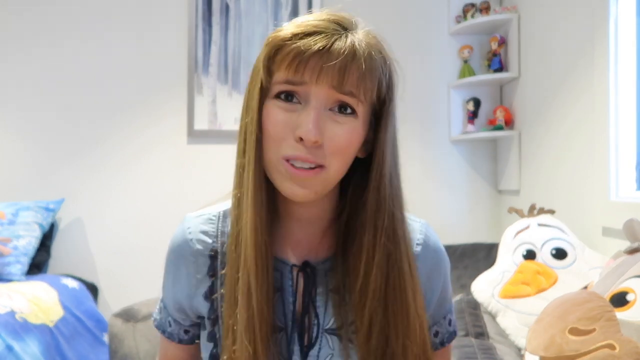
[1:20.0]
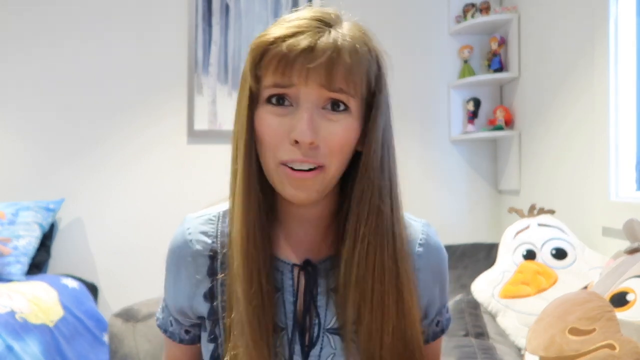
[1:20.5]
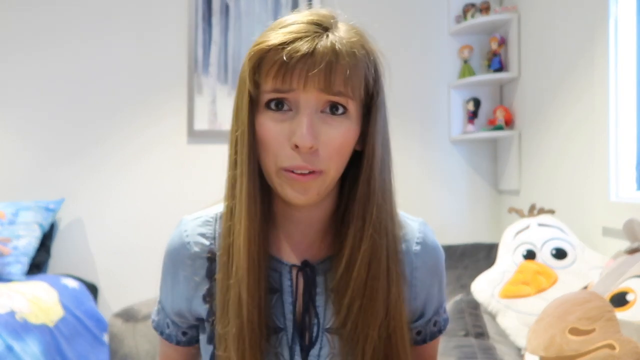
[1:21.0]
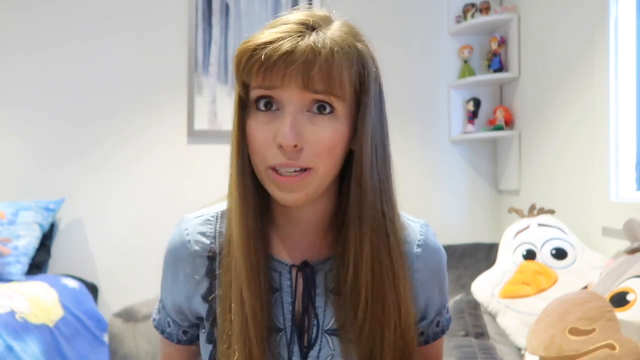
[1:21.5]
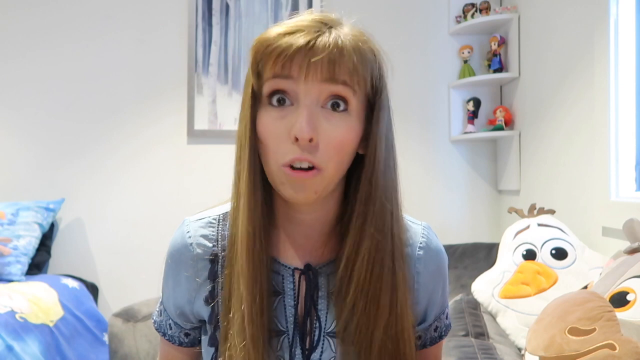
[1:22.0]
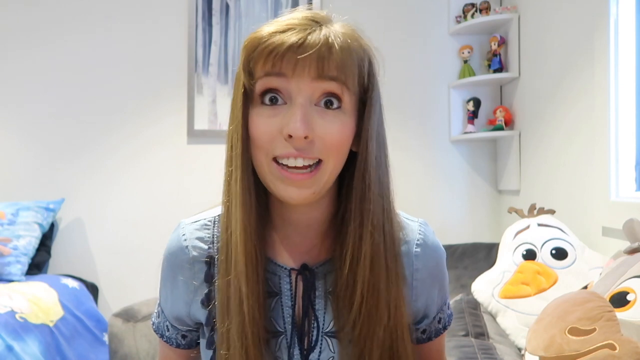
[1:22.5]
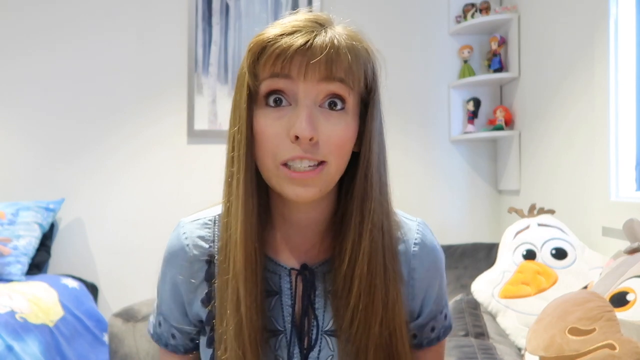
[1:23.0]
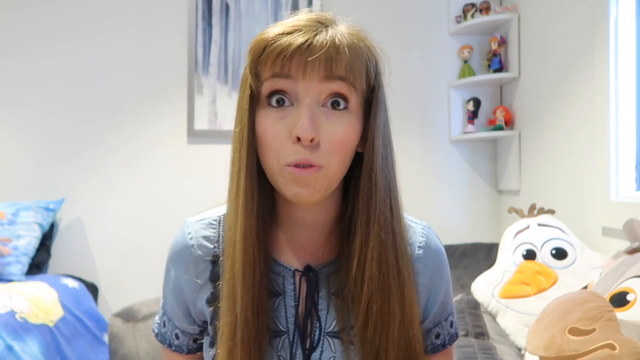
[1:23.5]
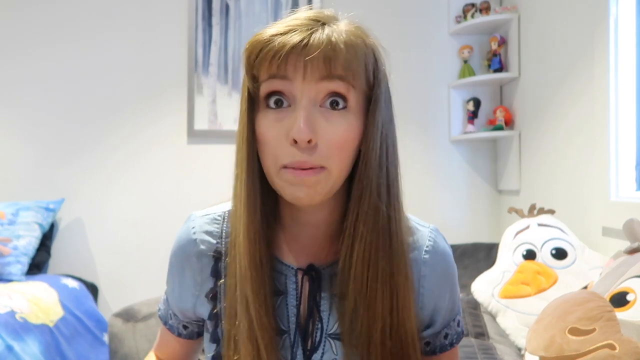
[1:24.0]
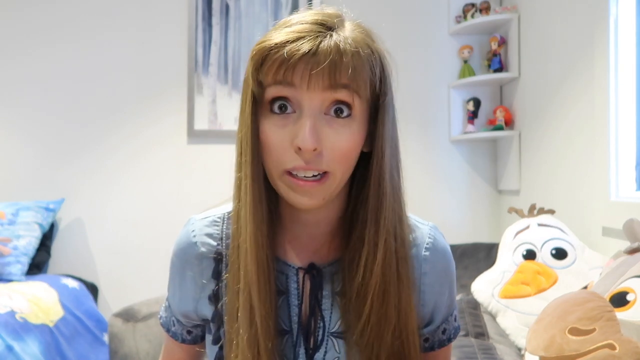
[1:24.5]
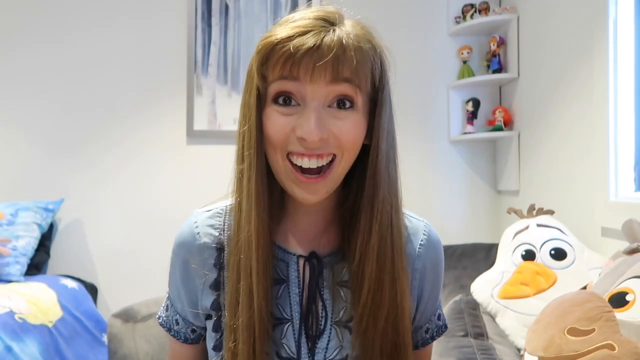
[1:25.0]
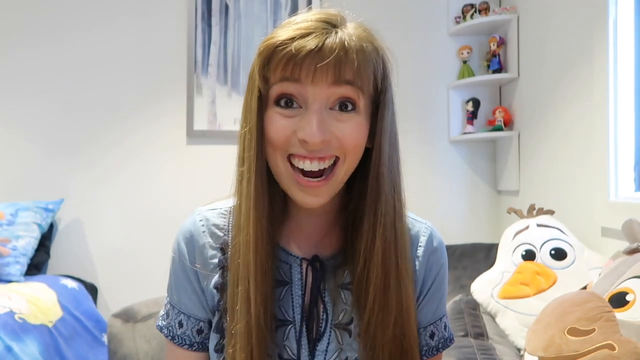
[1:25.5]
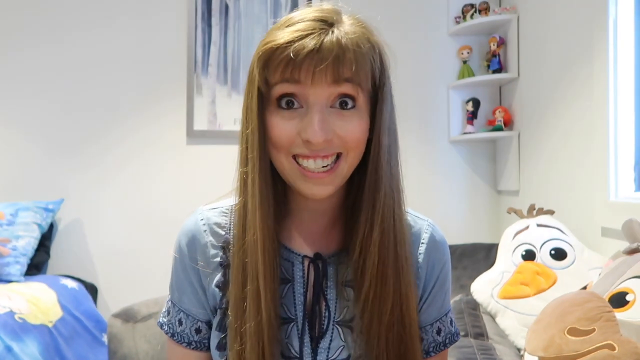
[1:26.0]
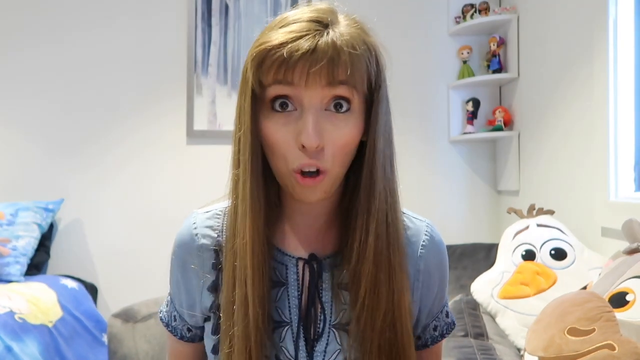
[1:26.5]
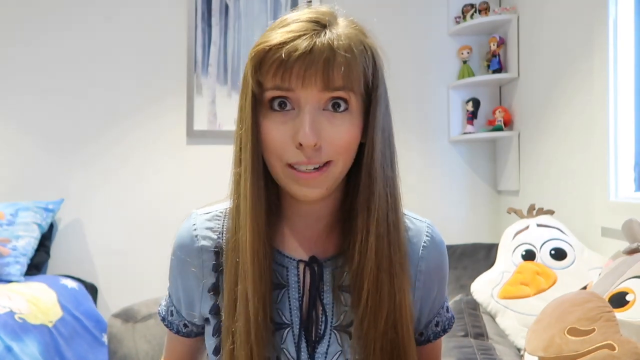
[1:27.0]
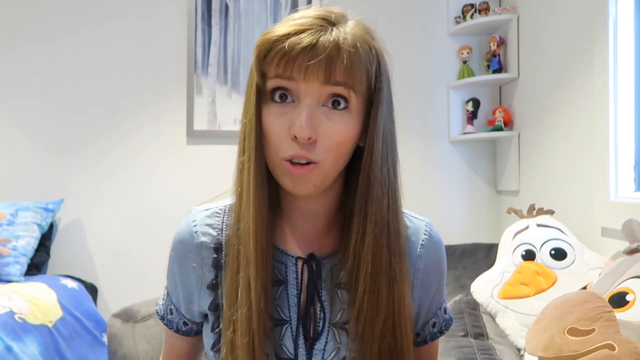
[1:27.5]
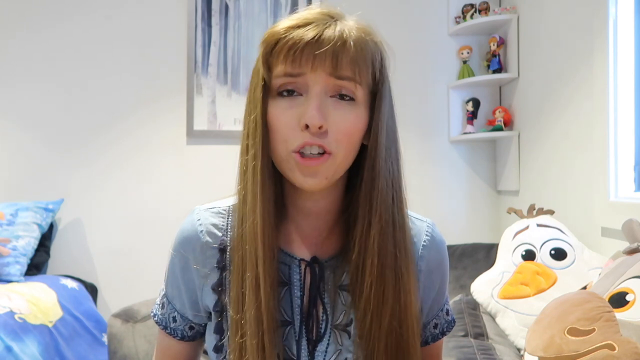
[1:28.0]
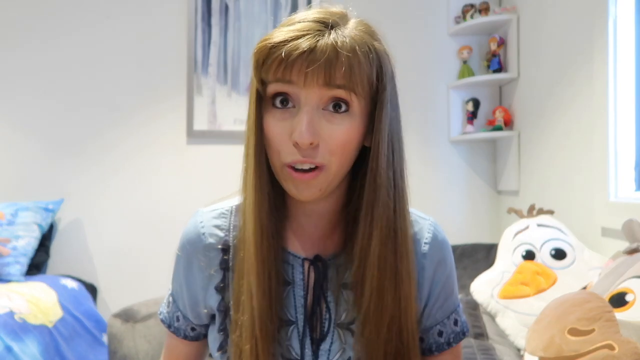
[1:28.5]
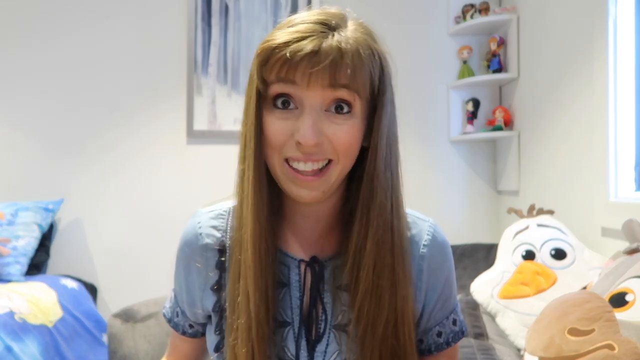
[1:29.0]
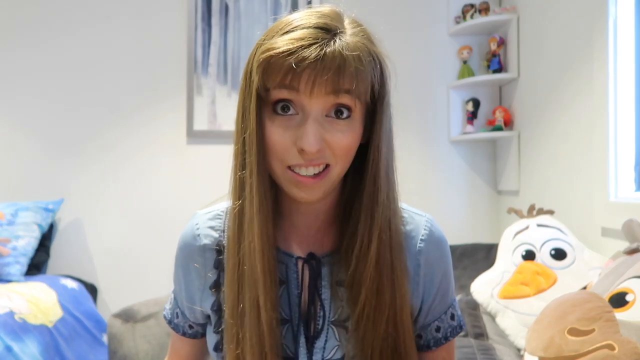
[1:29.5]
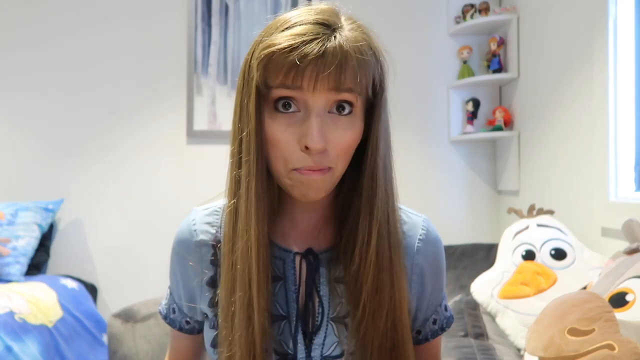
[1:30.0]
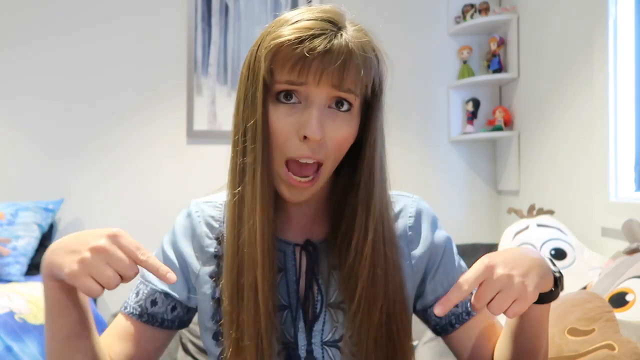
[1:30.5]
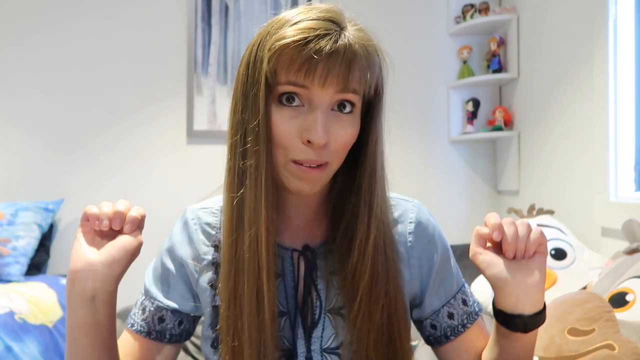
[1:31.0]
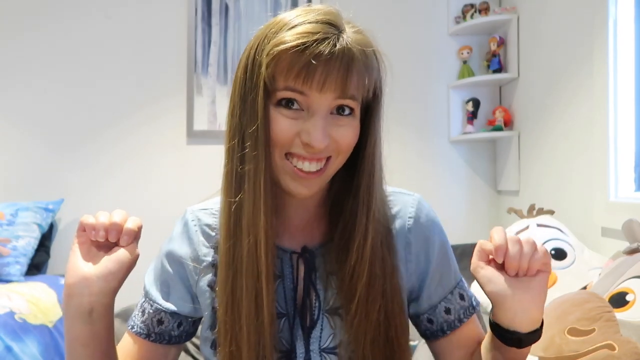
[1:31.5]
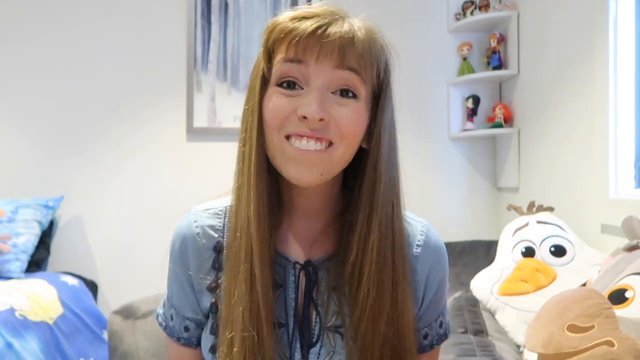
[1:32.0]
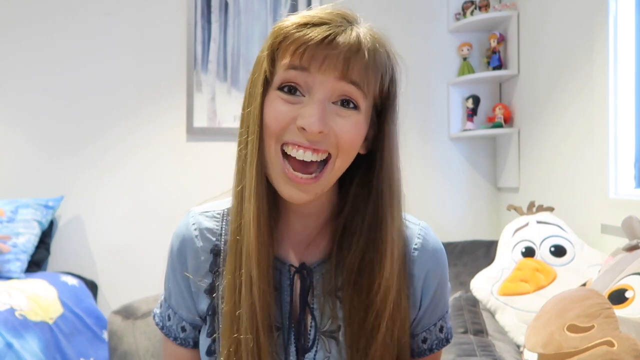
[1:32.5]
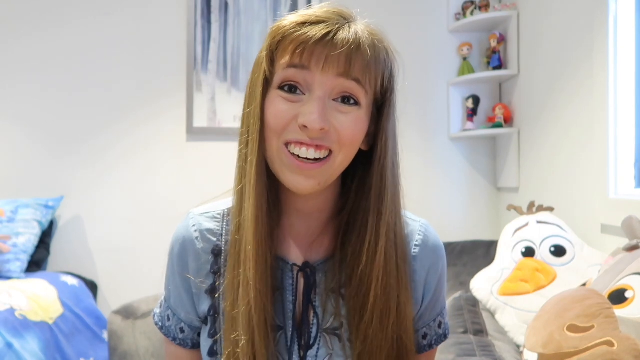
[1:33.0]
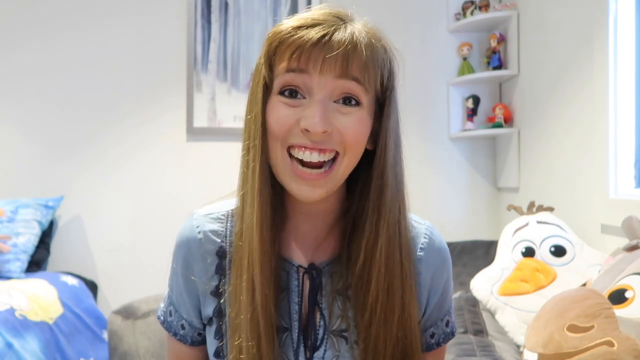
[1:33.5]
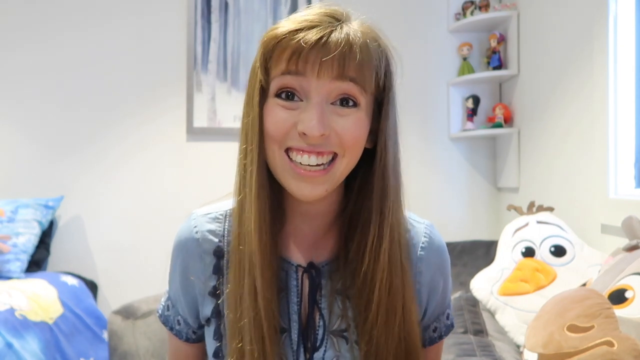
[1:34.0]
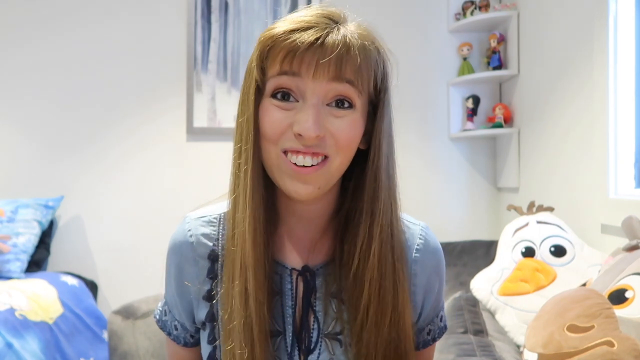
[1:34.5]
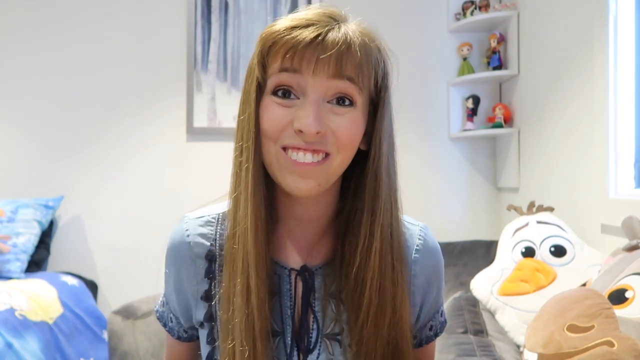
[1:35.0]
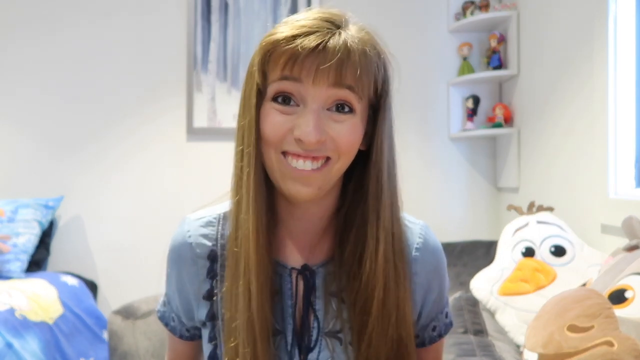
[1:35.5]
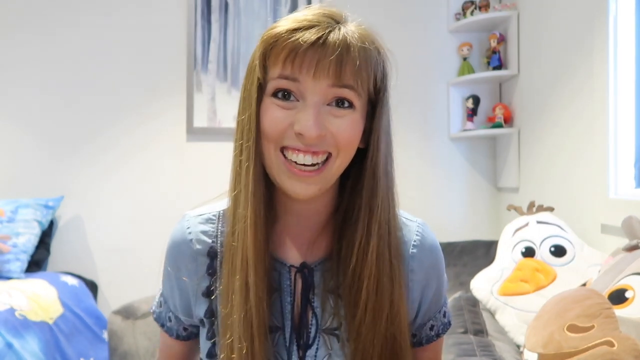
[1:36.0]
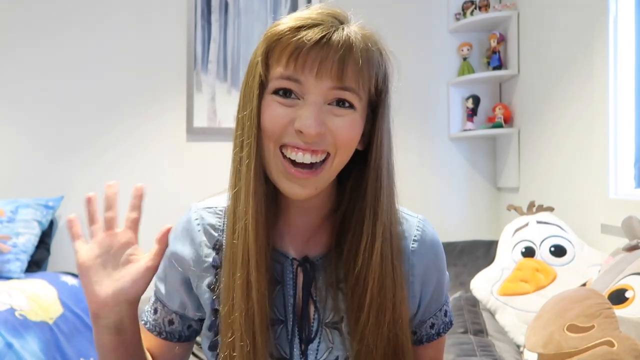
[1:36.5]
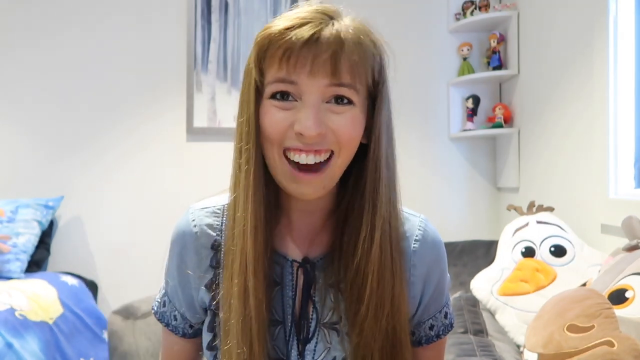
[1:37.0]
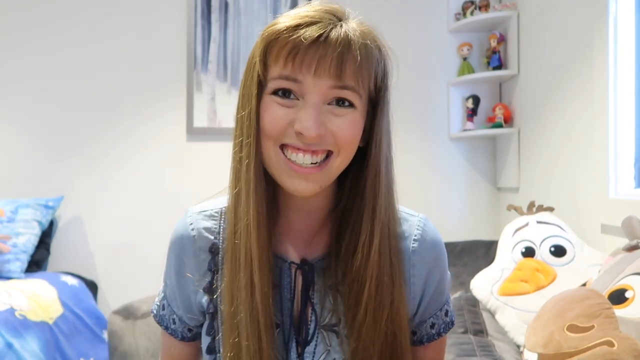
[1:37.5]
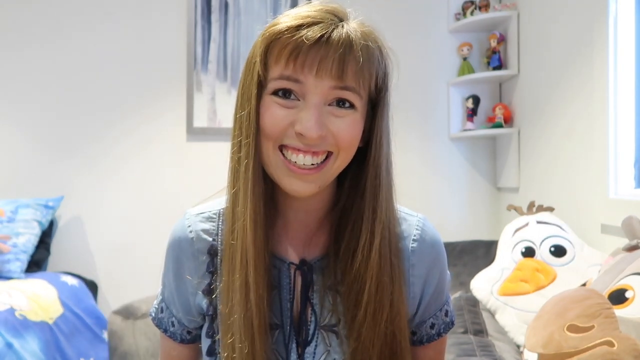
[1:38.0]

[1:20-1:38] The white woman with long, straight blonde hair speaks directly at the camera in her bedroom with white walls; a shelf with some small figurines is on the right side of the screen. She speaks very enthusiastically with a large variety of facial expressions, showing a big, wide smile with her teeth and opening her eyes very wide. She lifts both hands, makes a gesture with both hands pointing downward, and then closes her fists again. She continues talking to the camera with many facial expressions, then waves bye with her right hand while speaking directly into the camera. She wears a blue top. Part of a bed is on the left side of the screen, and on the right side is a bird, maybe a stuffed bird.